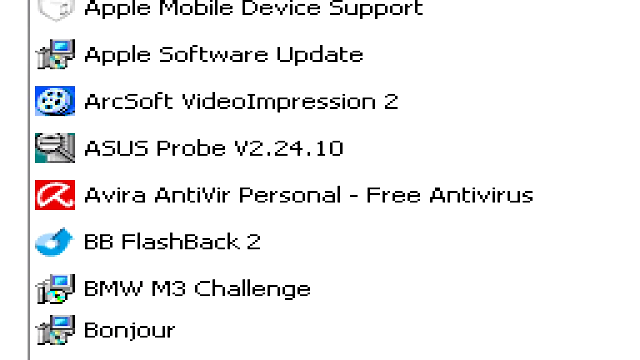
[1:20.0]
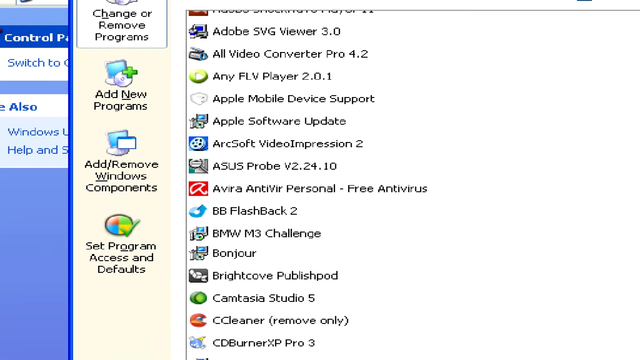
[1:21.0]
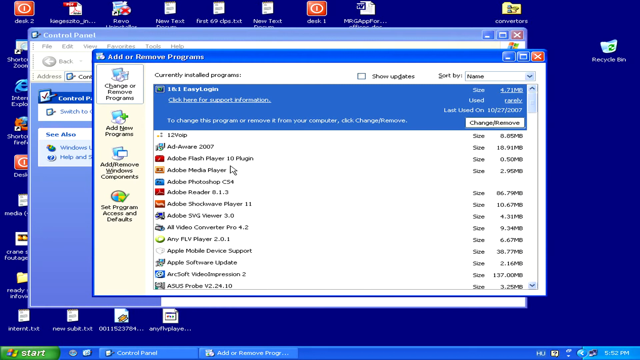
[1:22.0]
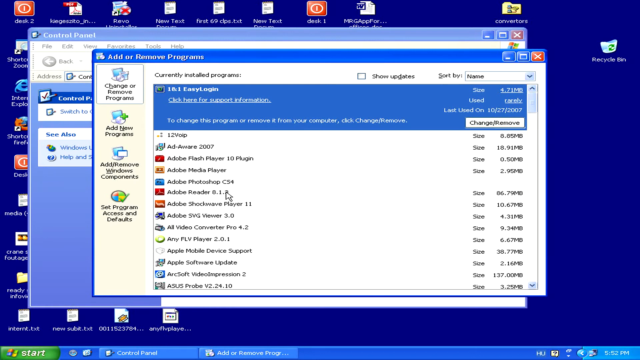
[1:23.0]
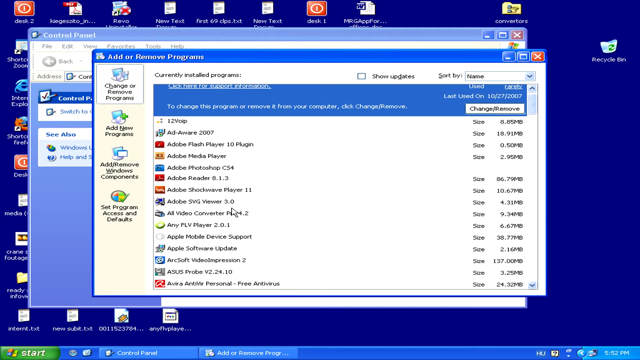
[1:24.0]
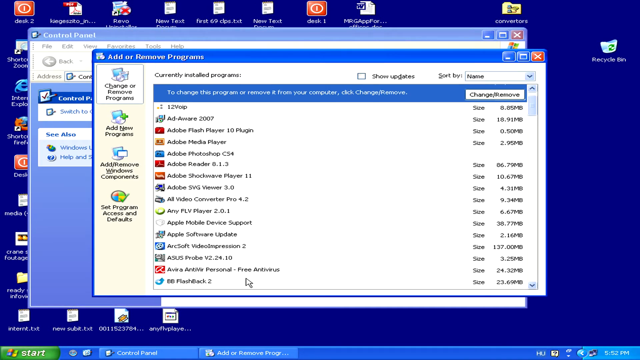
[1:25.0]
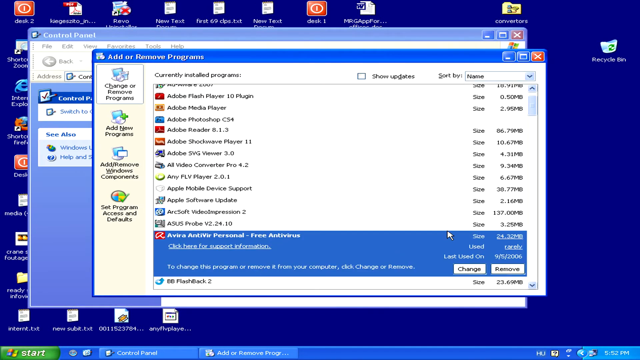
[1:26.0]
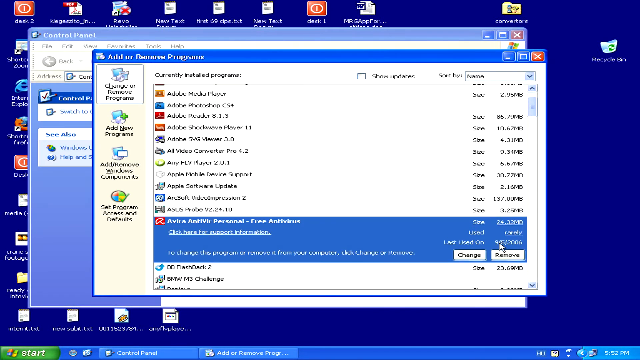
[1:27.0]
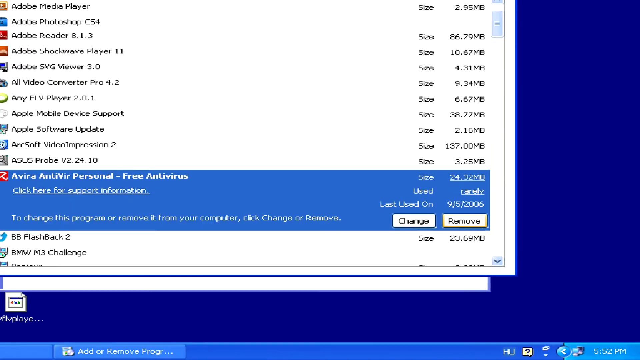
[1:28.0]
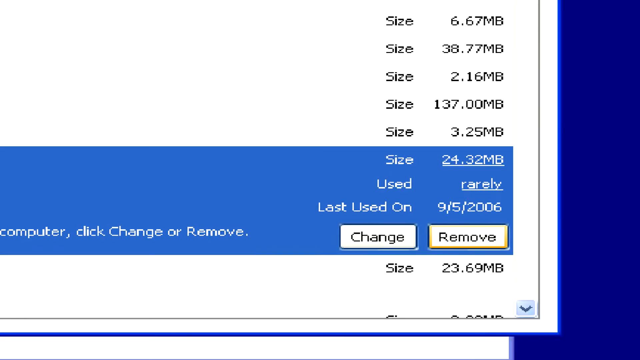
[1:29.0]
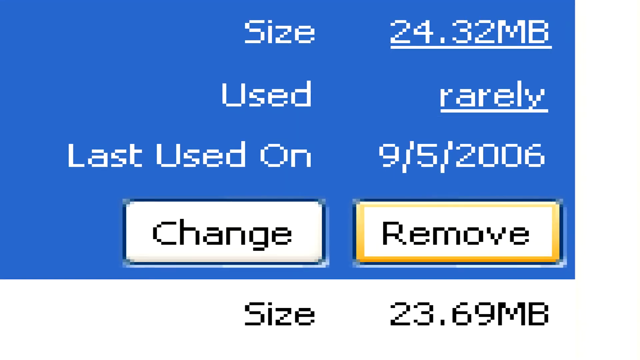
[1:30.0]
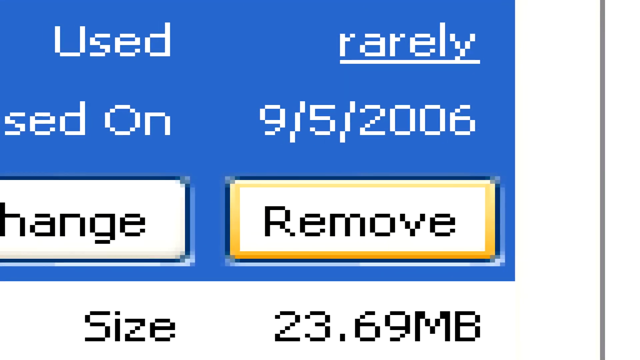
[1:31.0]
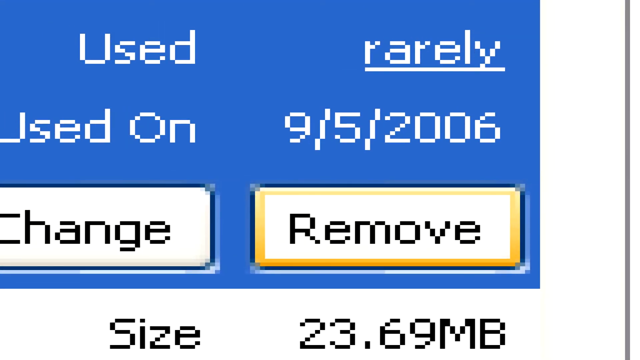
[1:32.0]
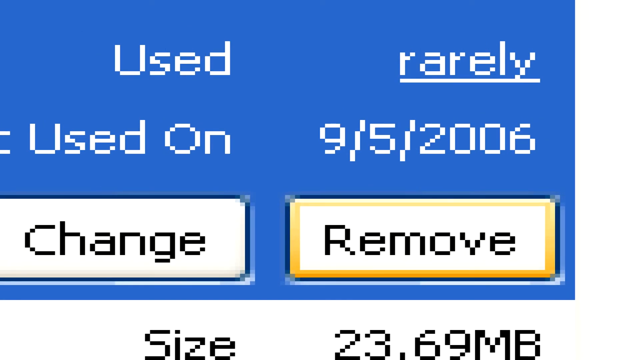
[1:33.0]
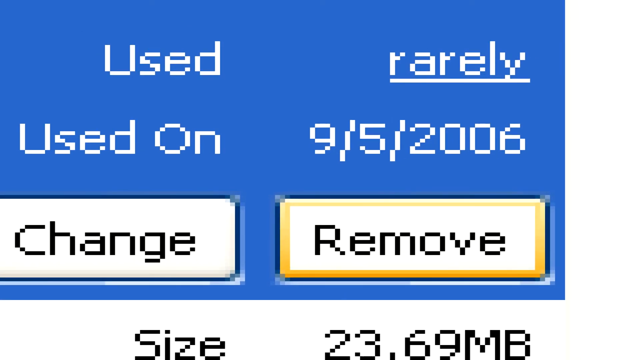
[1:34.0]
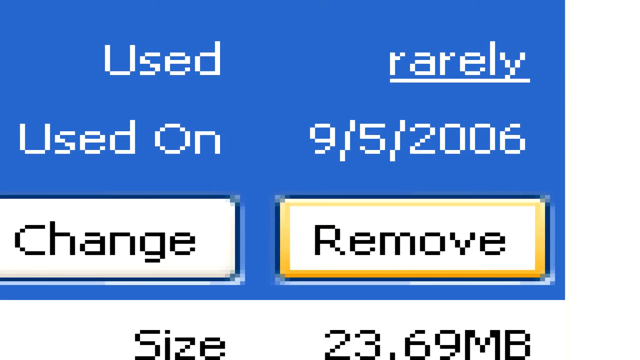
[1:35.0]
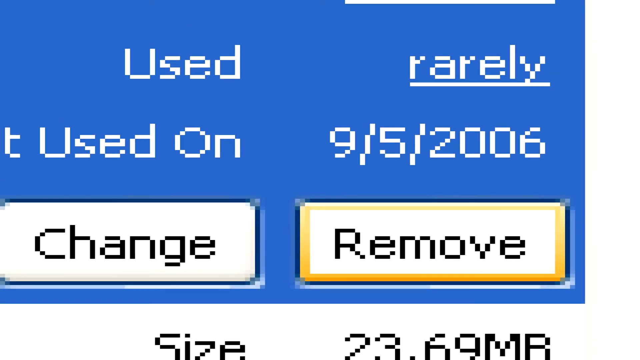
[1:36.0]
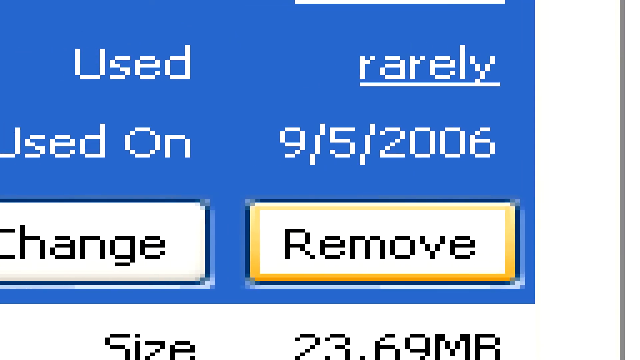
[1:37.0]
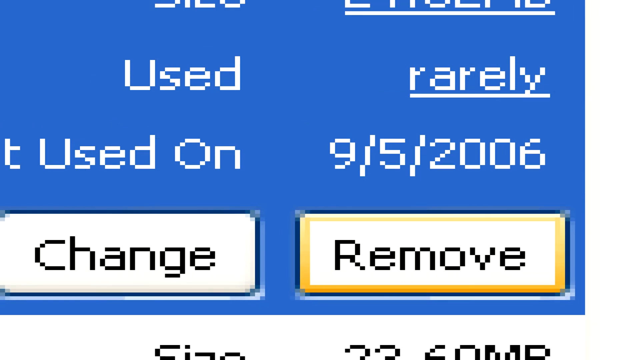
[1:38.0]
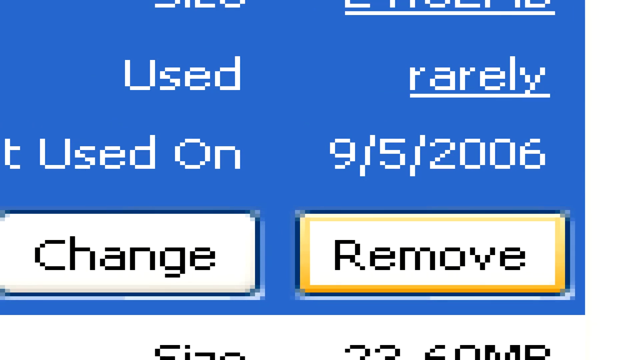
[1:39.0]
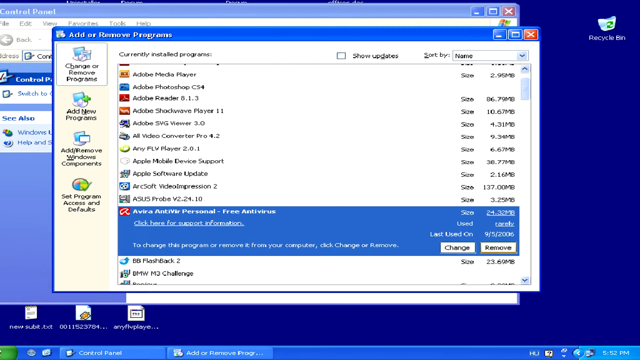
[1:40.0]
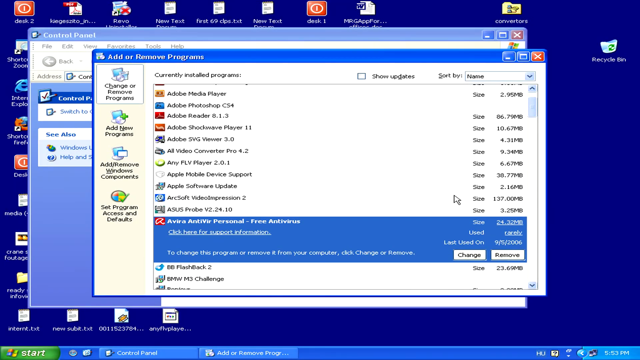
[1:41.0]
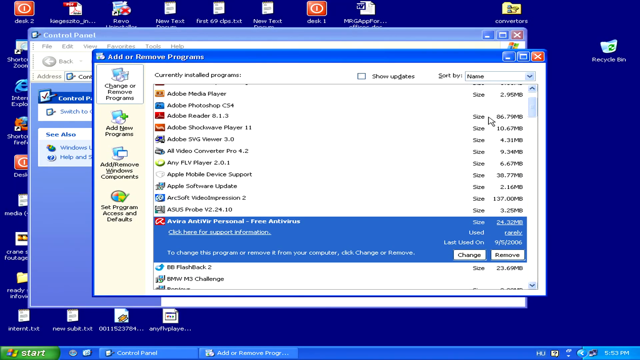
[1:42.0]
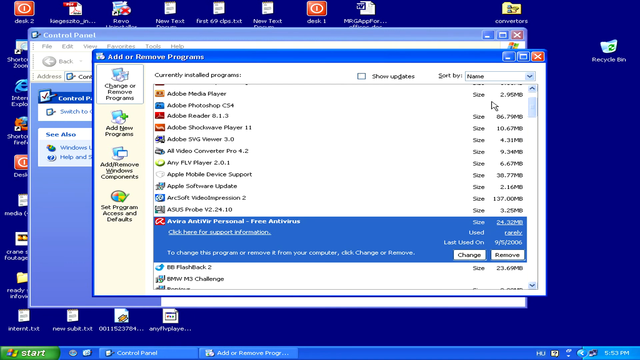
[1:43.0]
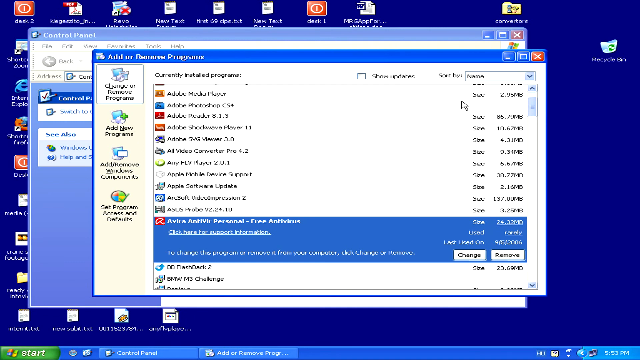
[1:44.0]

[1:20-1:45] The very old desktop operating system is shown, possibly Windows 95. The young man seen at the beginning is apparently showing how to remove software. Obsolete software on the computer includes Asus Probe, a very old version of Microsoft Word, and Internet Explorer.